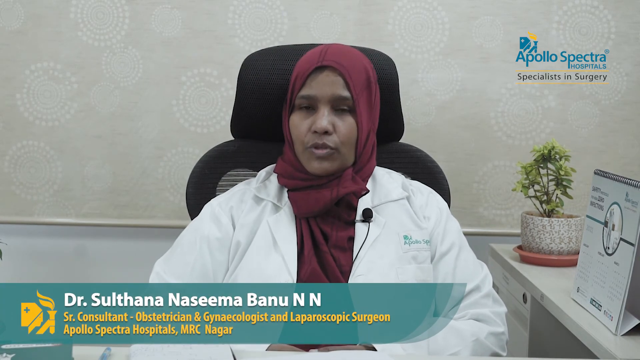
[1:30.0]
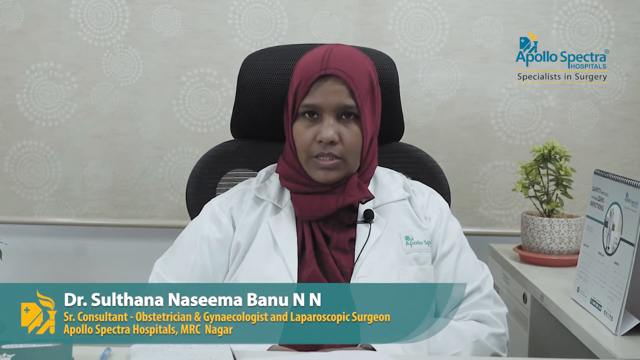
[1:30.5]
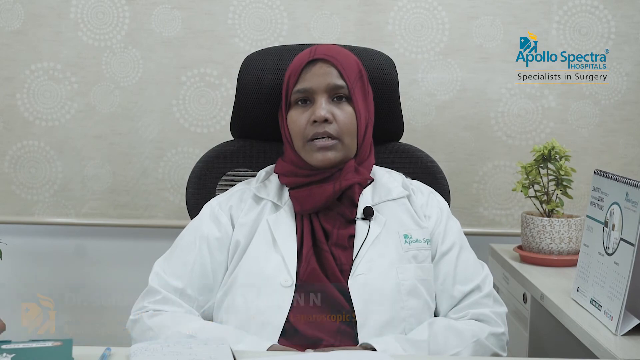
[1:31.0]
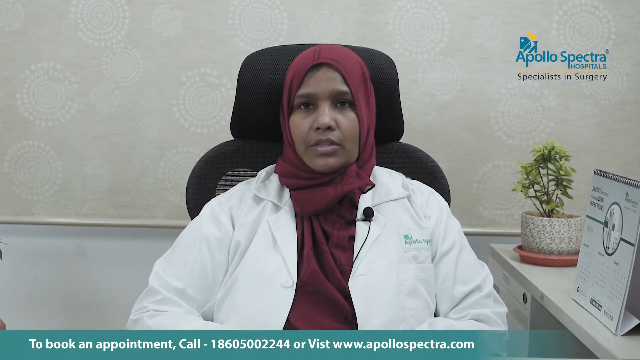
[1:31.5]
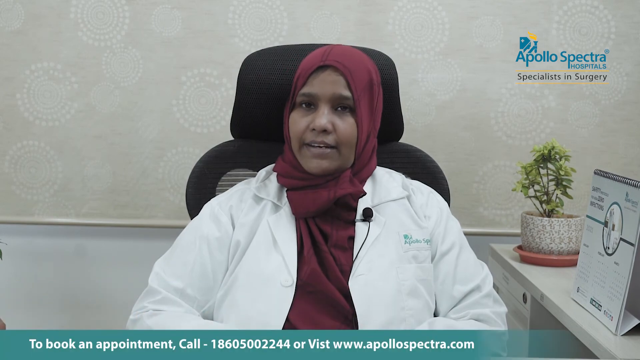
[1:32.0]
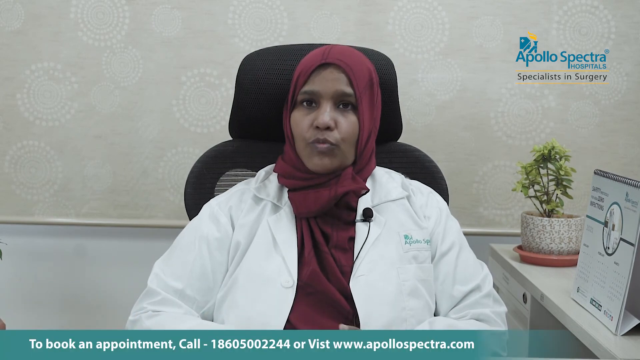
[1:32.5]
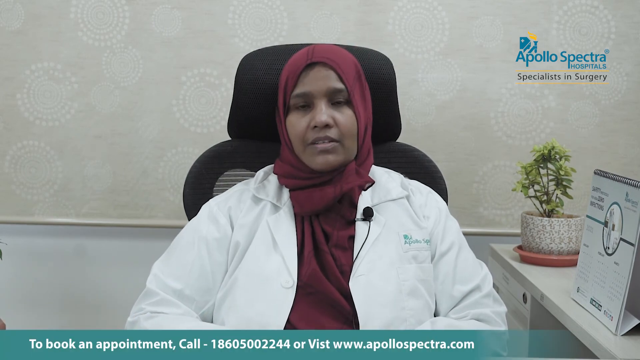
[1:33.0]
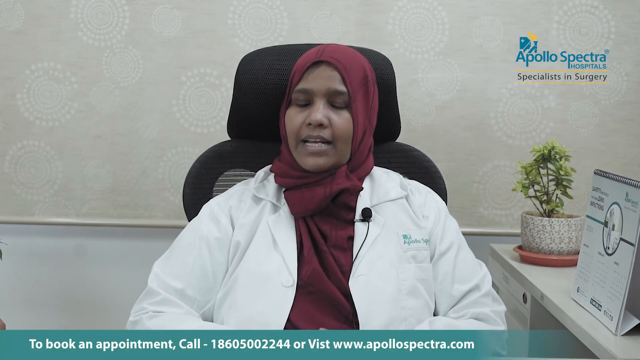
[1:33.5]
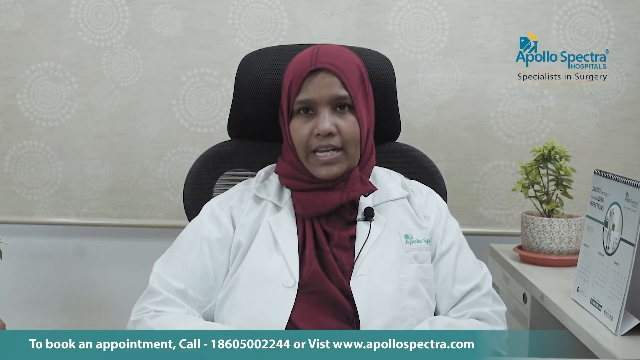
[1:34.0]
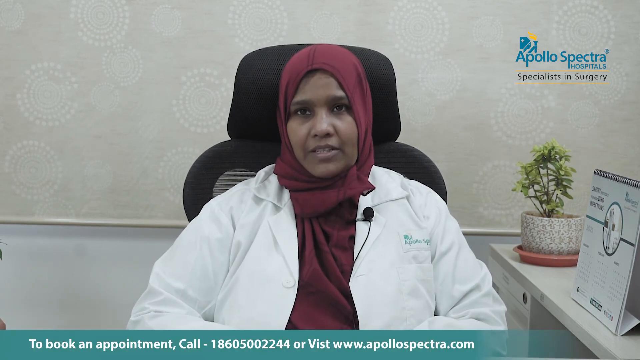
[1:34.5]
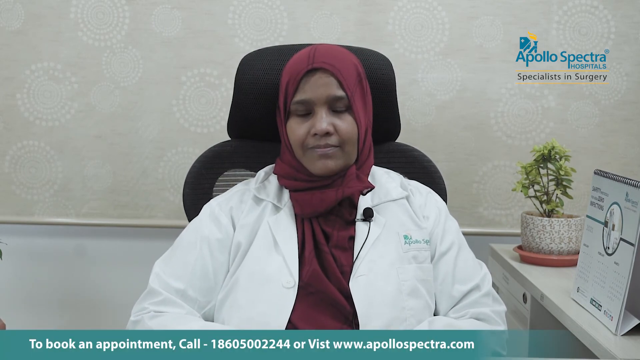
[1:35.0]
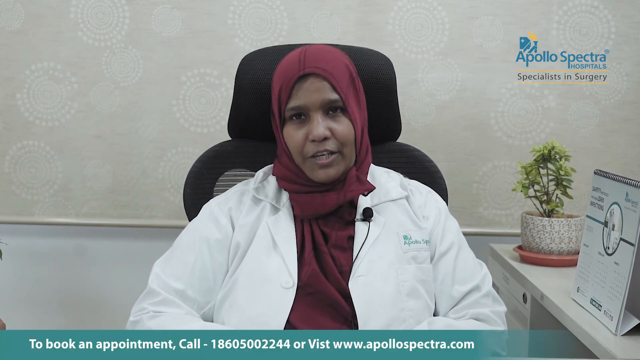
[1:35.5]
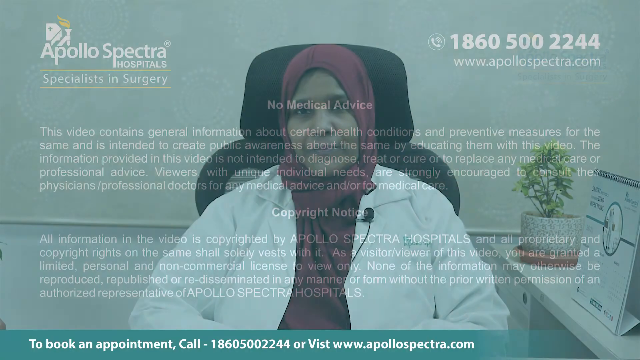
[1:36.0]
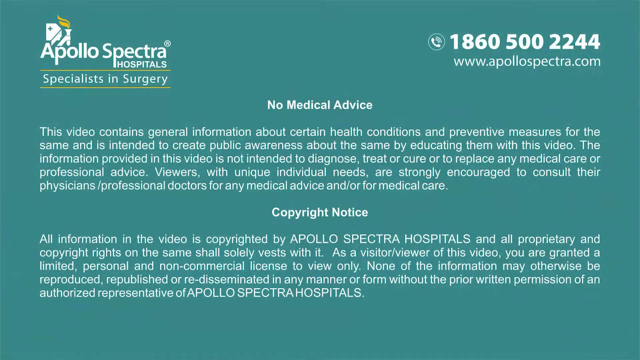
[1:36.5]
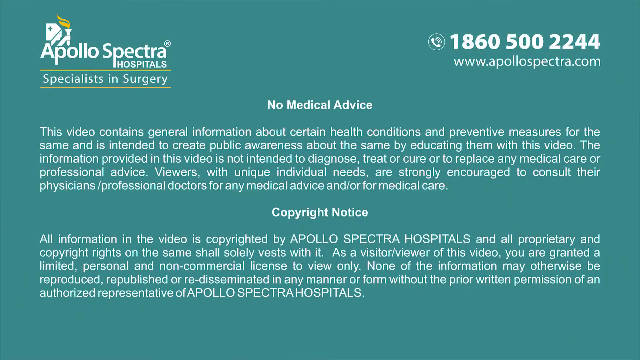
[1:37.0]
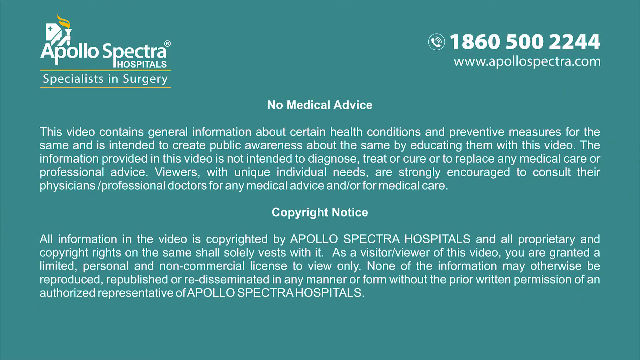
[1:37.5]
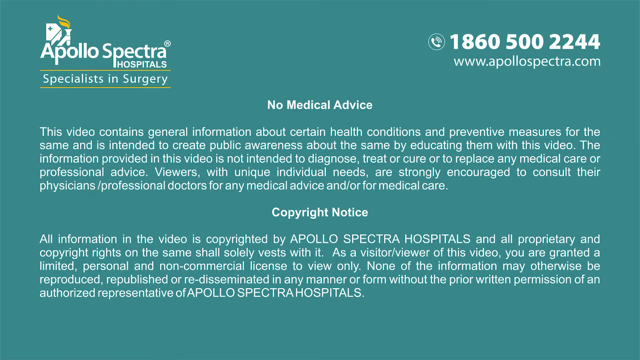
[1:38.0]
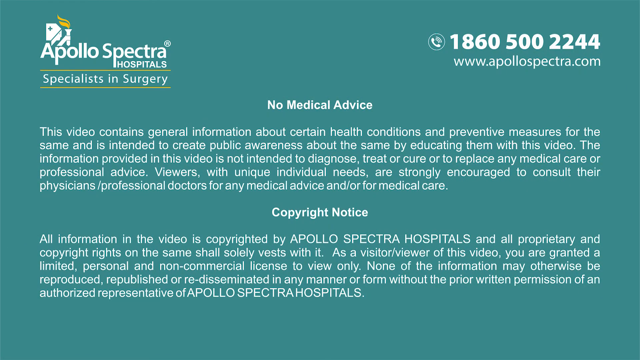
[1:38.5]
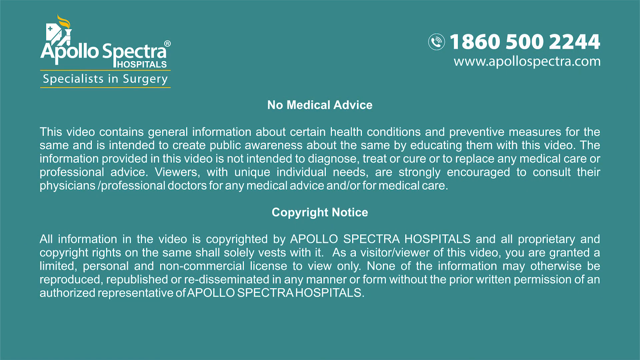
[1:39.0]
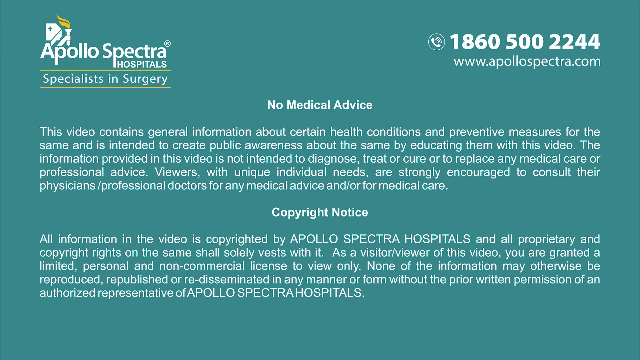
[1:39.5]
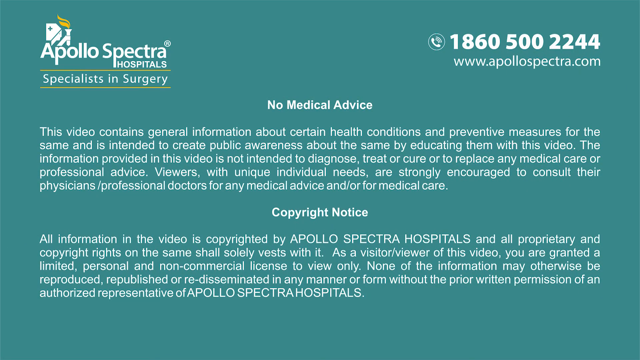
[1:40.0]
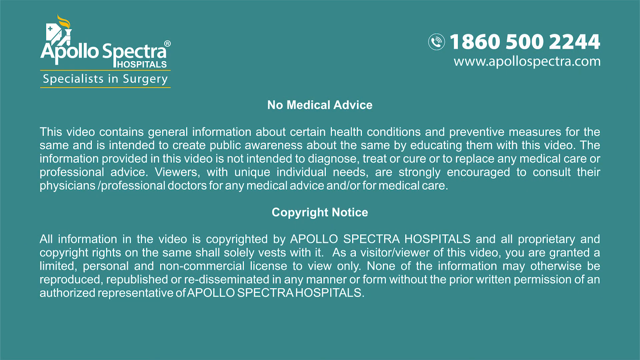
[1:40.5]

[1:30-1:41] A medical professional, apparently female, is sitting in a black chair in what appears to be a medical office. She wears a red headscarf and a white doctor's coat with a black microphone attached. A desk to her left holds two things: a small plant and some type of spiral-bound medical reference or chart whose contents are hard to make out. The words "Apollo Spectra Hospital Specialists in Surgery" appear at the top right of the video and stay present the entire time. At the bottom of the video, a name identifies the doctor. Wallpaper covers only the top half of the wall behind her.